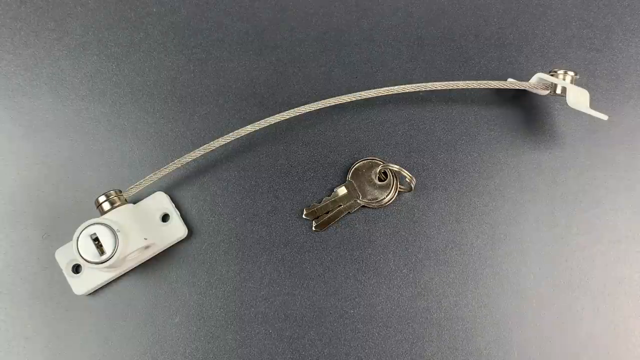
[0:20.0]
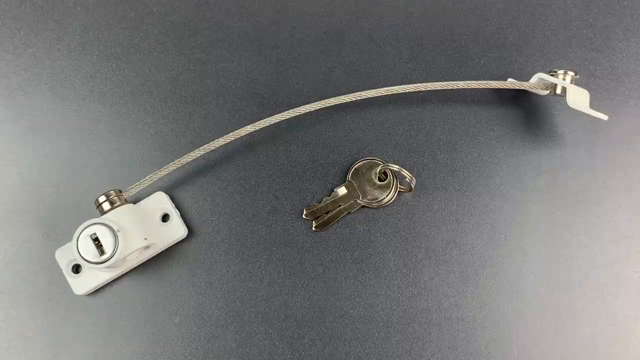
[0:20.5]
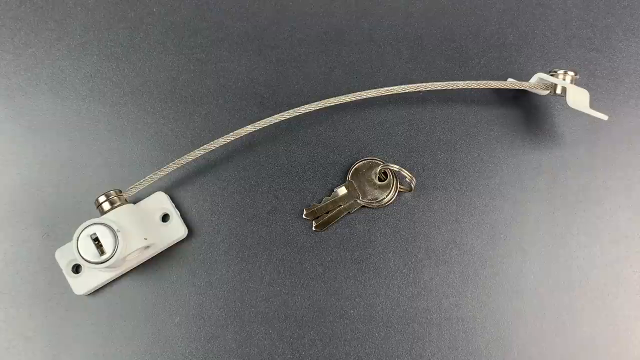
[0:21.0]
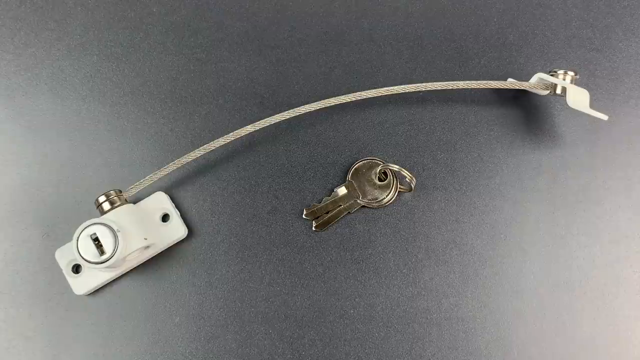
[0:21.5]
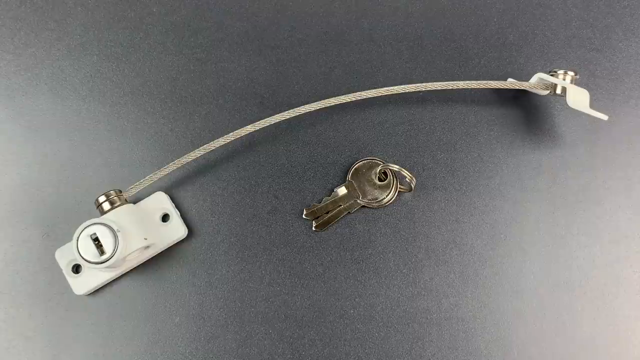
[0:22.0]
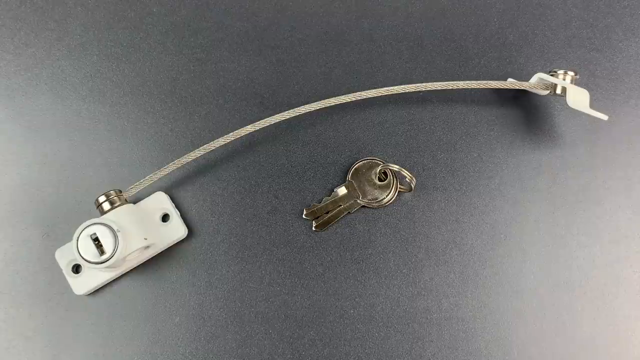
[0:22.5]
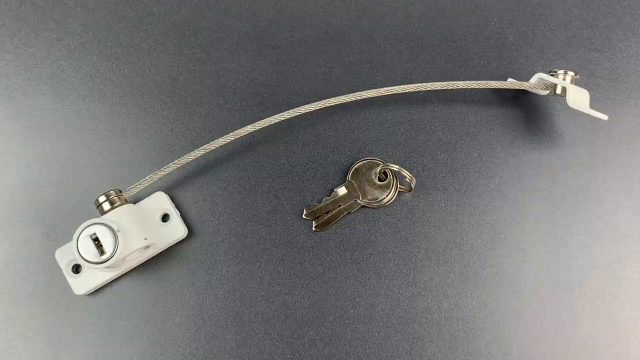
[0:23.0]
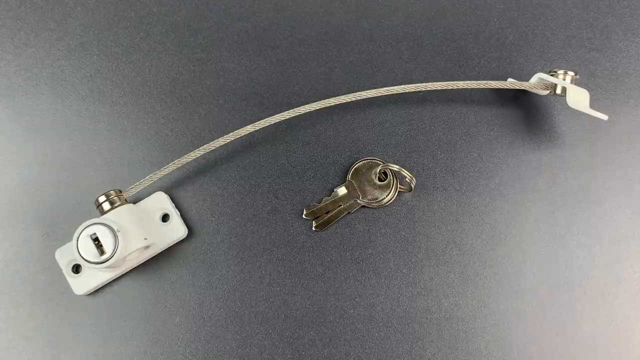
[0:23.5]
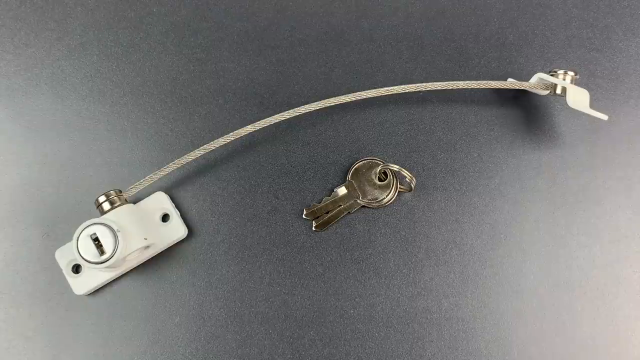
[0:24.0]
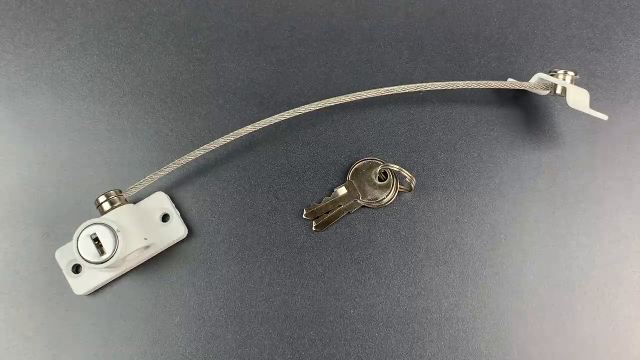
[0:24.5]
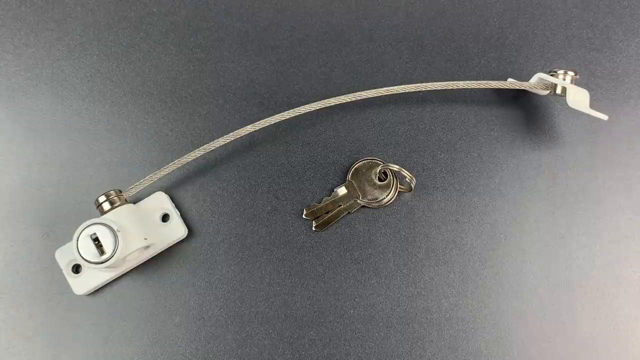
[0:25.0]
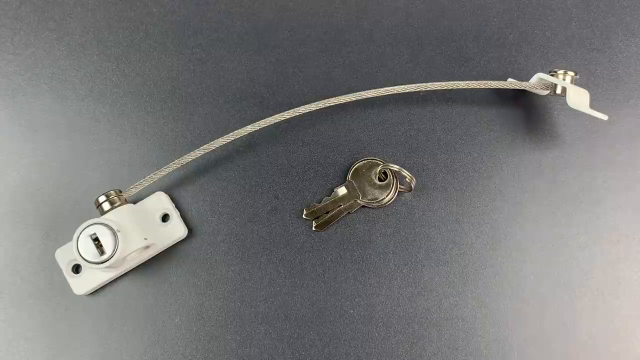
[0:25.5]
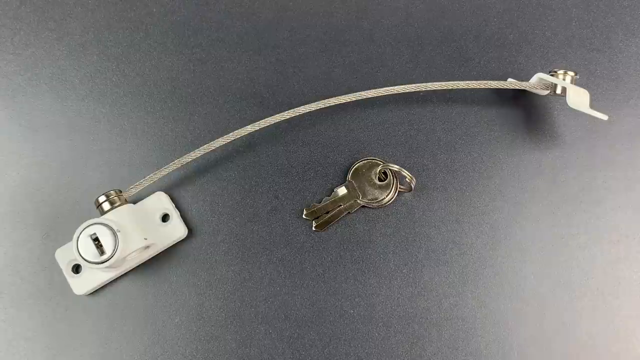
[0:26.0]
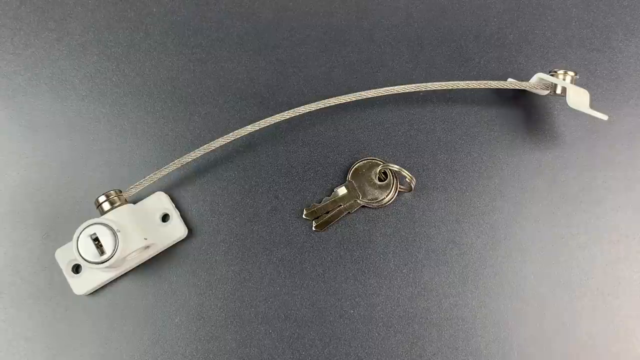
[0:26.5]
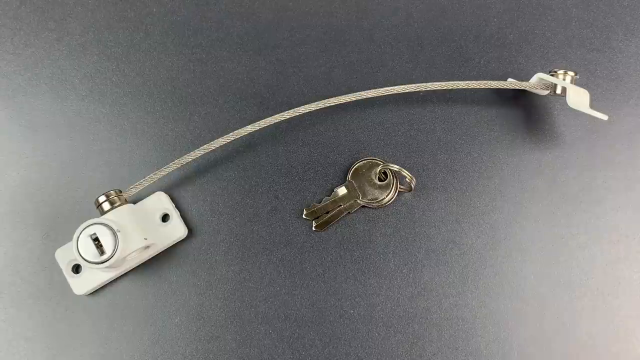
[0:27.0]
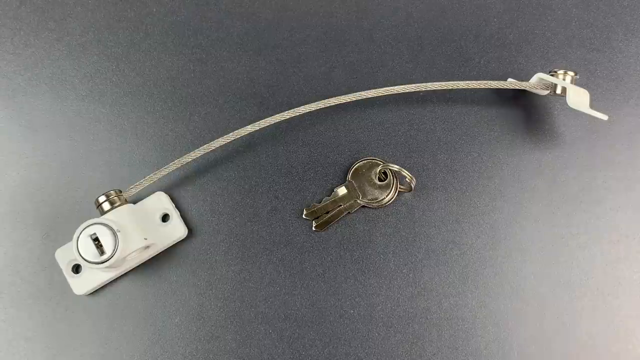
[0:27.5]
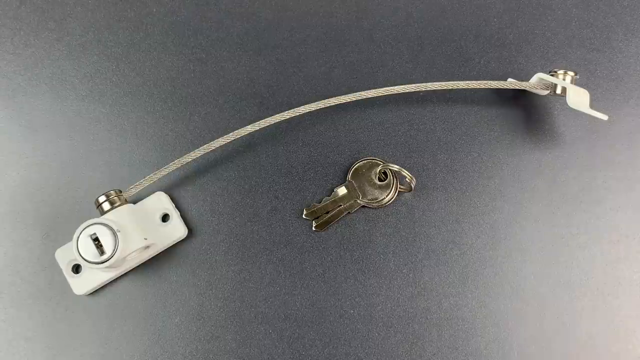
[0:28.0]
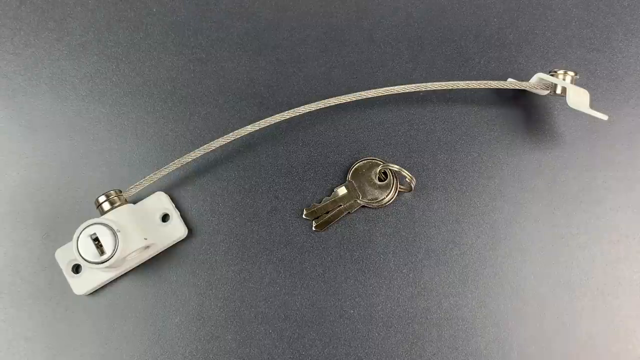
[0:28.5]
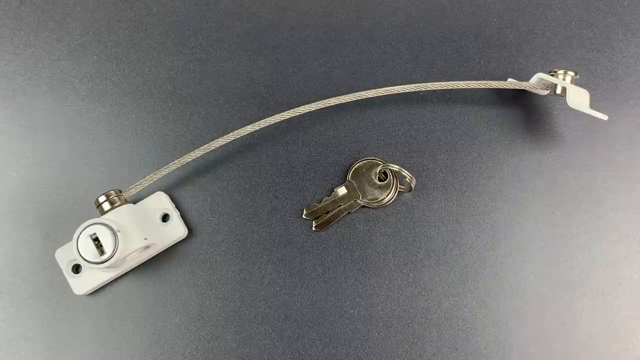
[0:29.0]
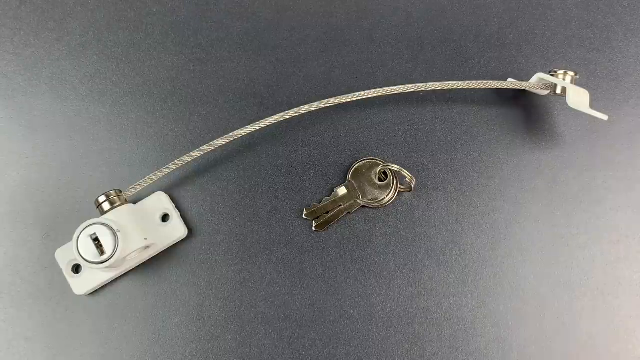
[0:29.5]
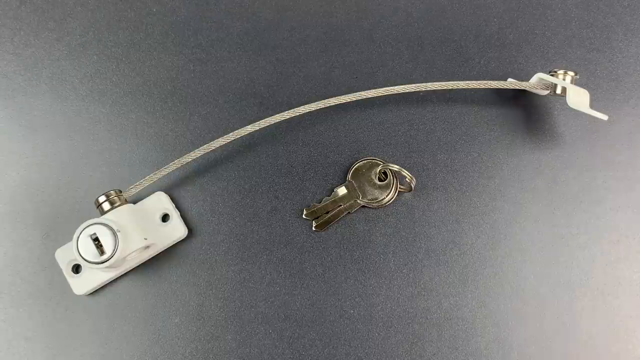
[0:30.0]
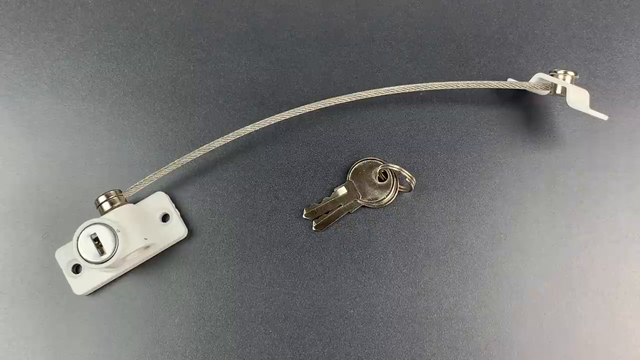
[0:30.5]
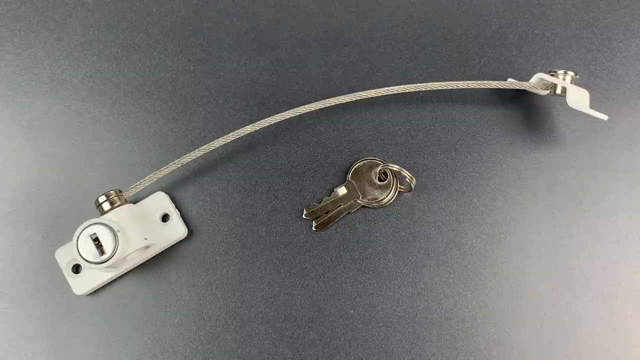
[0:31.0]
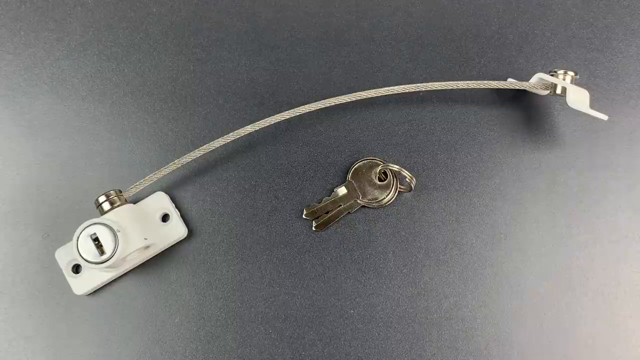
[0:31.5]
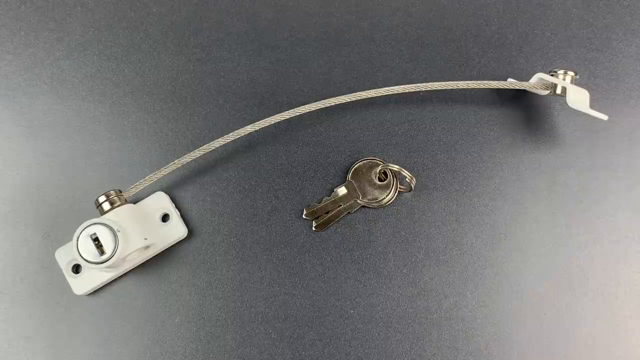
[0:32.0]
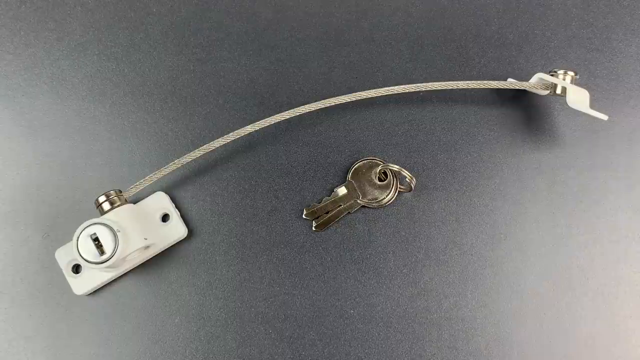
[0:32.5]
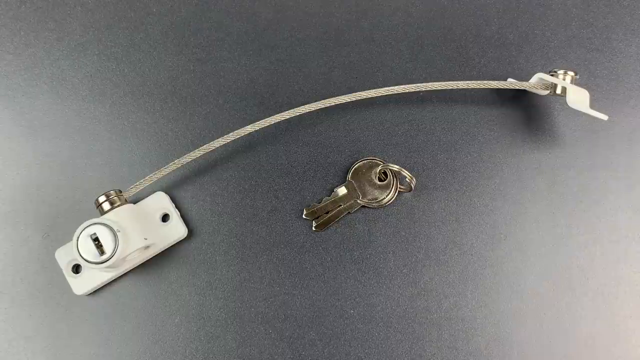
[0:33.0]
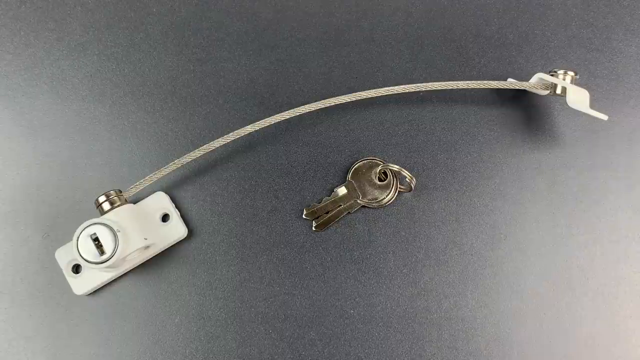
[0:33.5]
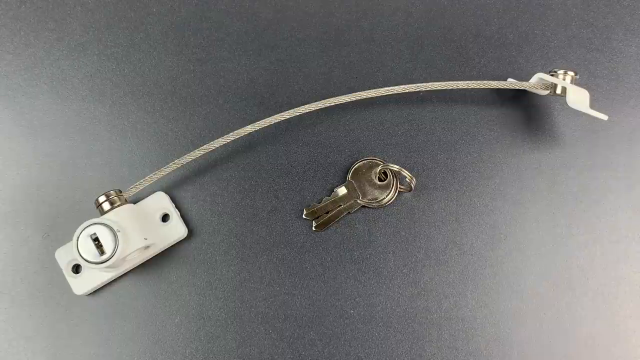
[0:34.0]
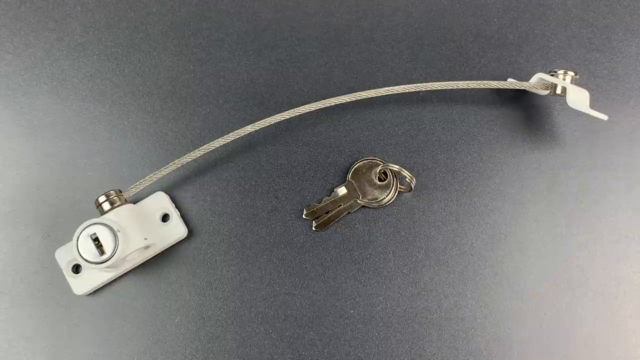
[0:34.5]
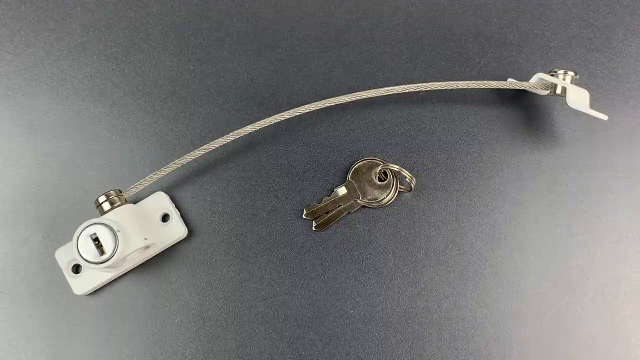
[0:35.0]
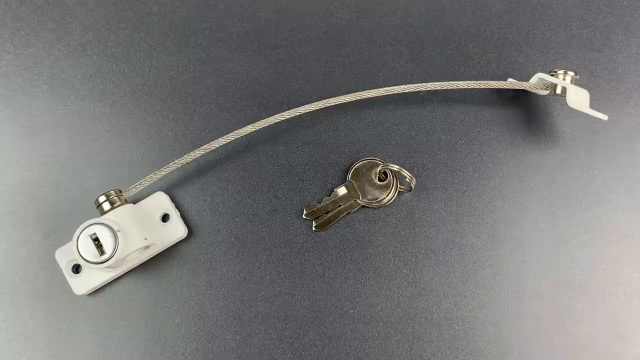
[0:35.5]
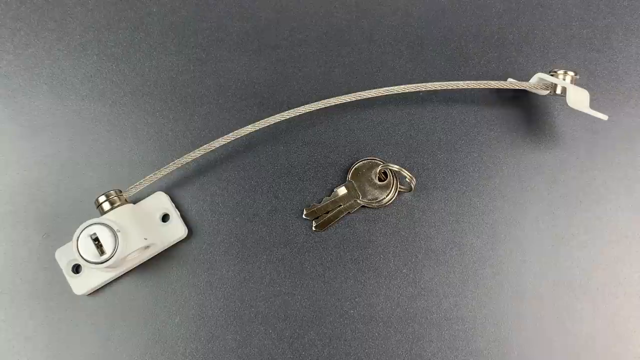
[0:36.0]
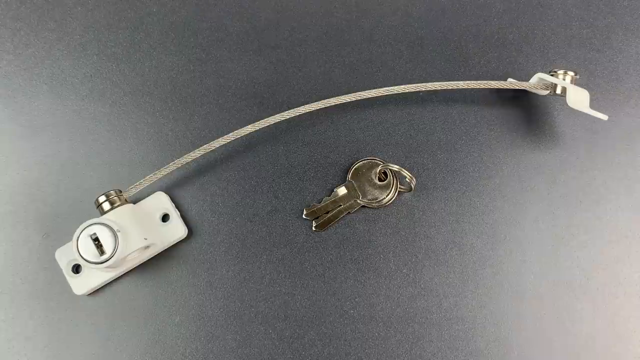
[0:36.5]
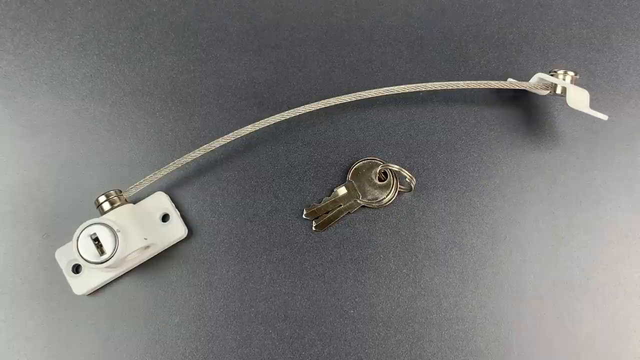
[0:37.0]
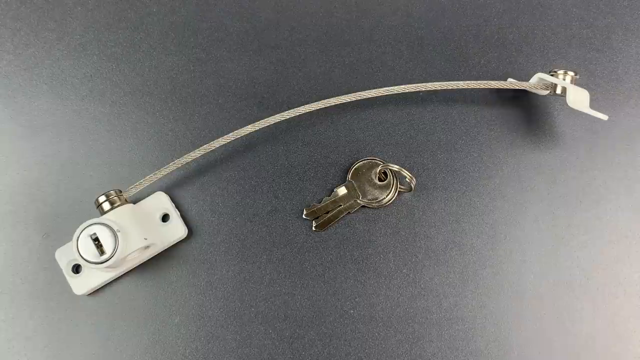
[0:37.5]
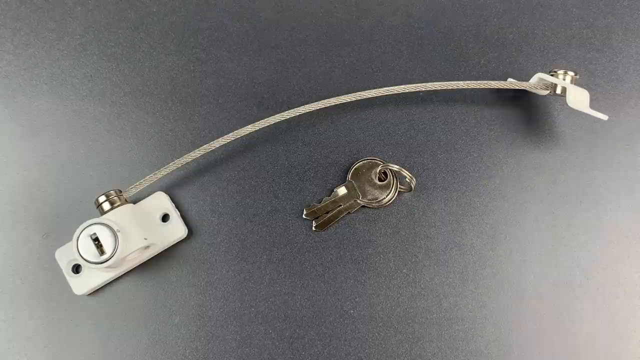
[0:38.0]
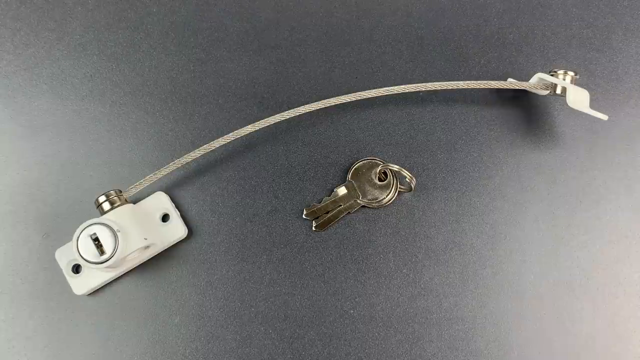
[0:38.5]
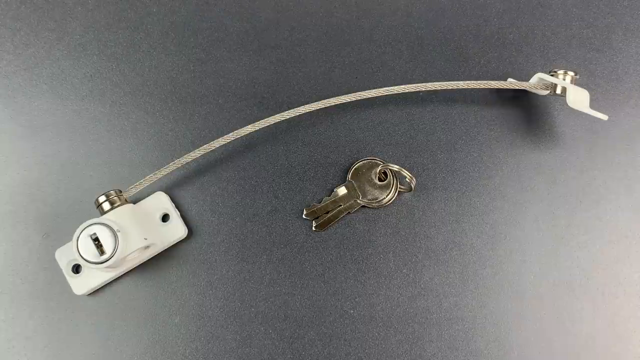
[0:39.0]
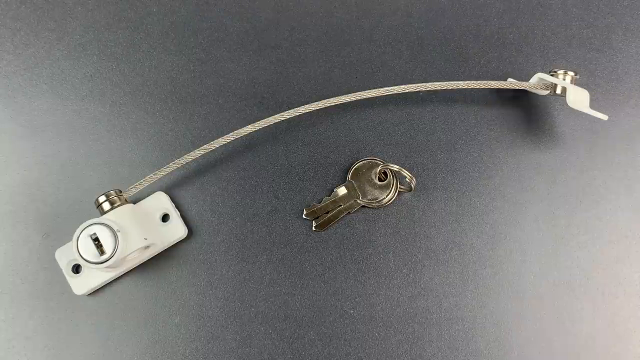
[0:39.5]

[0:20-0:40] Two keys are on a silver circular key chain; the silver keys have no color and no apparent words on them. The lock is a rectangular piece with a hole on either side for screws, and the lock itself is a standard slit for a key. On top of the lock, a silver circular piece holds a white arm, which has a silver screw-like piece on its other end. The purpose of this bar is unclear. The silver keys look like they would fit in the lock.